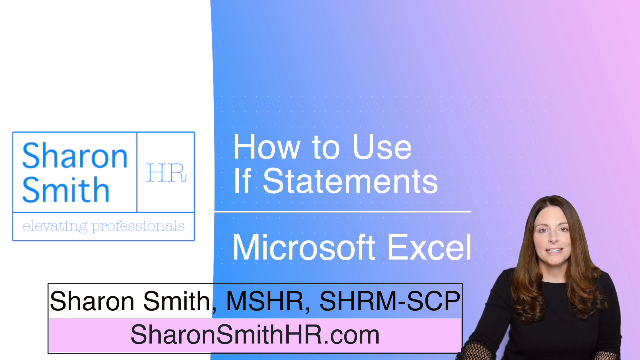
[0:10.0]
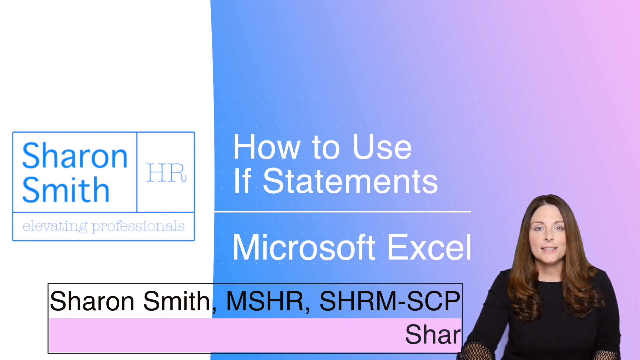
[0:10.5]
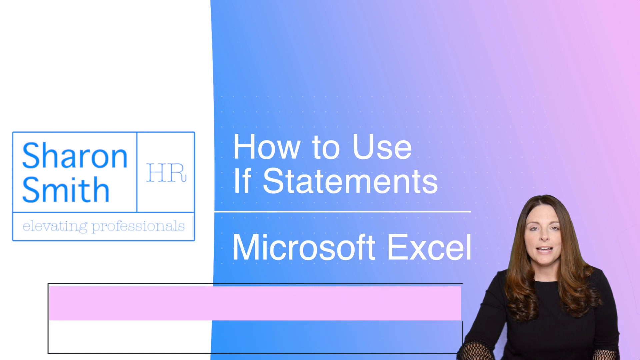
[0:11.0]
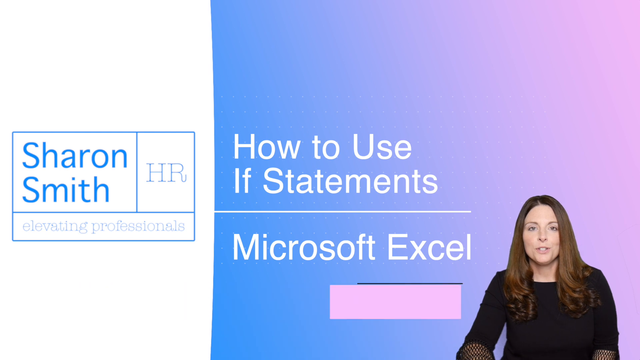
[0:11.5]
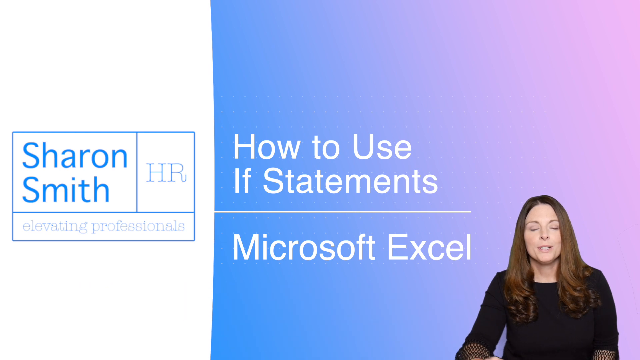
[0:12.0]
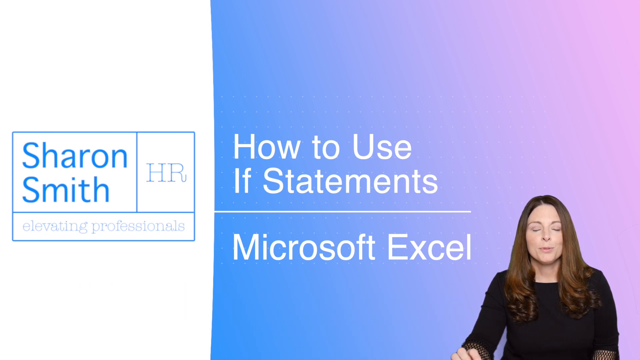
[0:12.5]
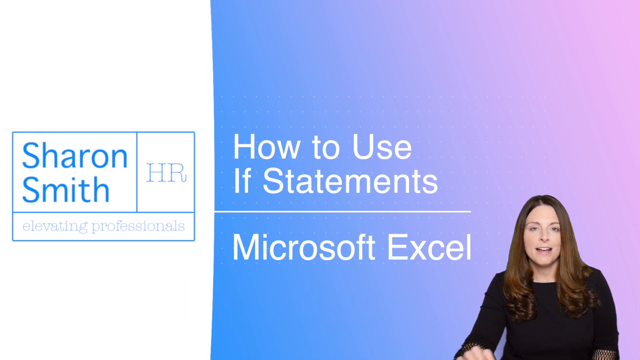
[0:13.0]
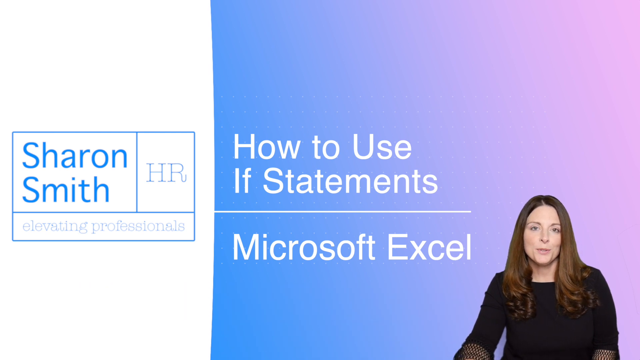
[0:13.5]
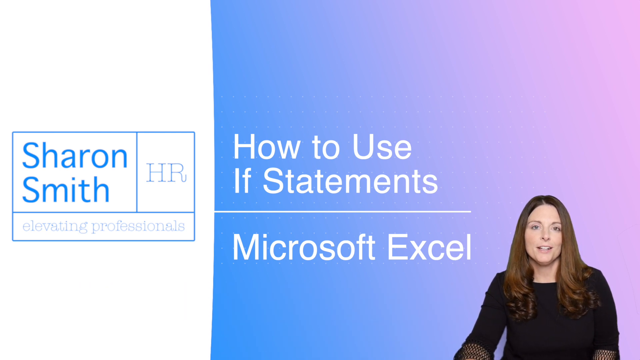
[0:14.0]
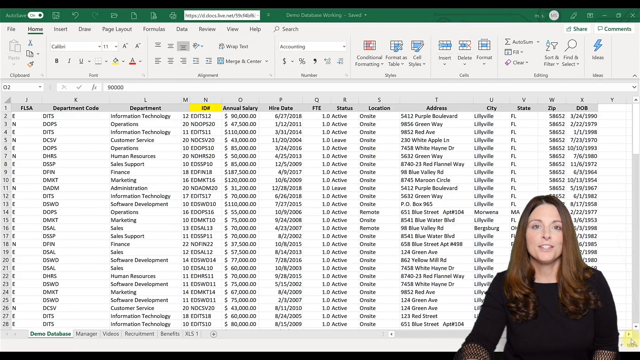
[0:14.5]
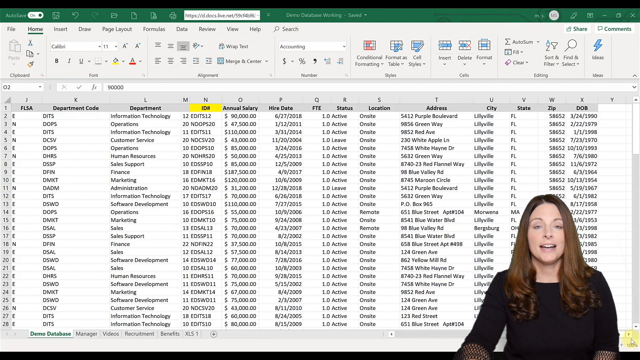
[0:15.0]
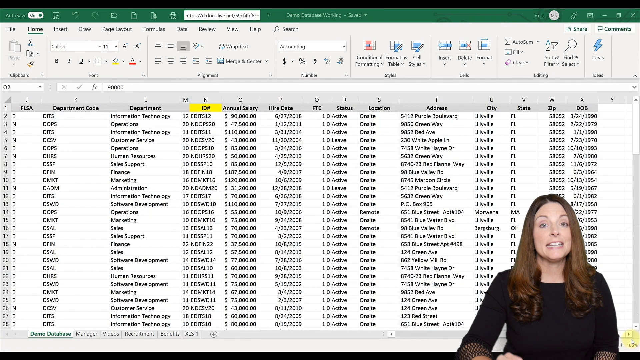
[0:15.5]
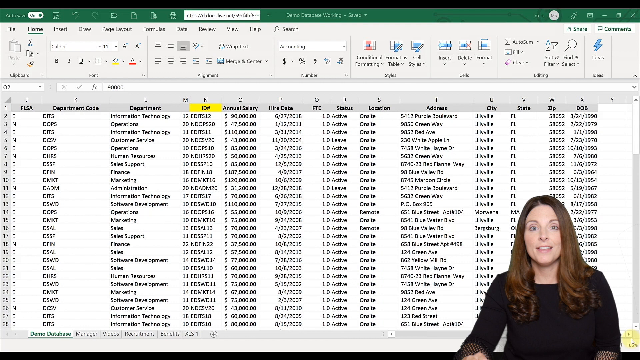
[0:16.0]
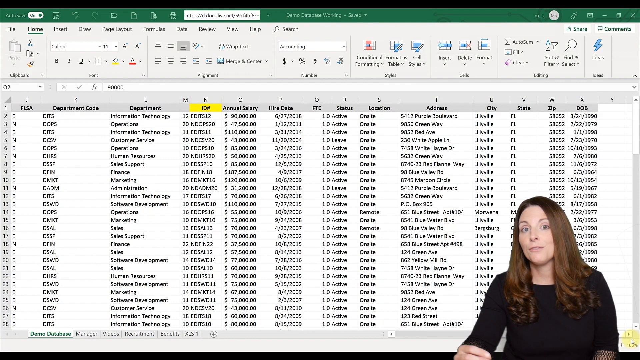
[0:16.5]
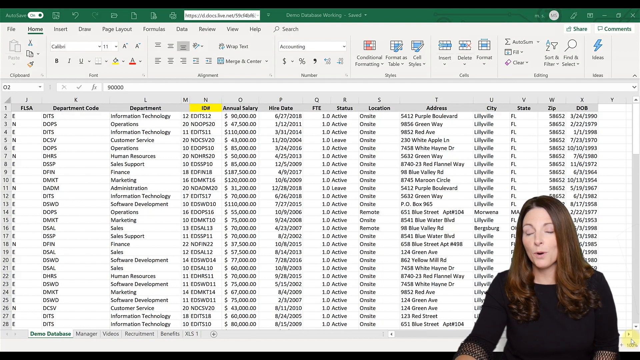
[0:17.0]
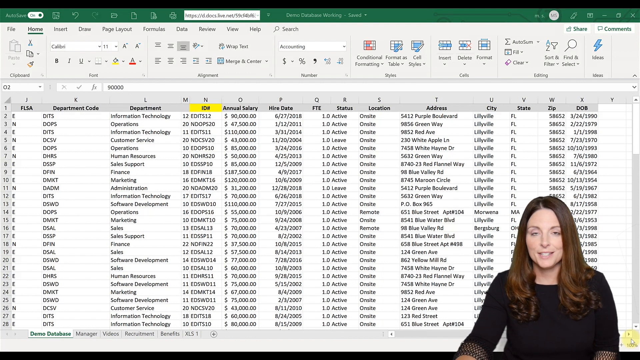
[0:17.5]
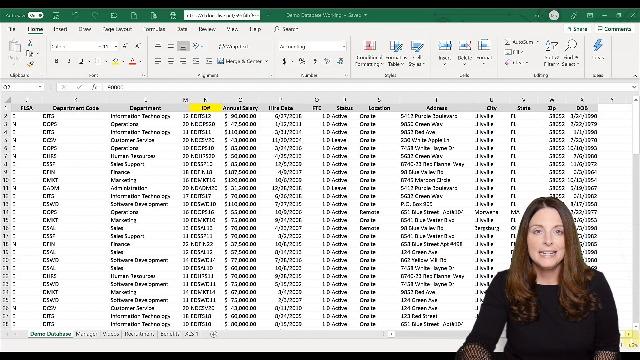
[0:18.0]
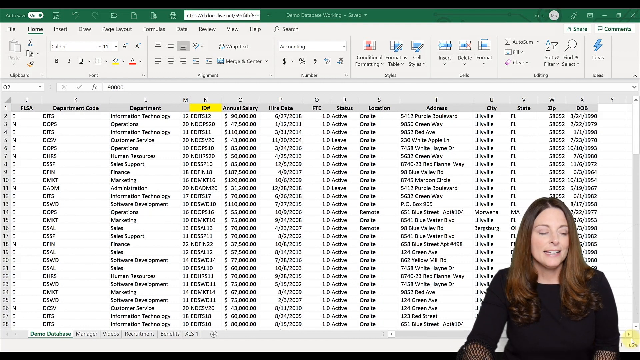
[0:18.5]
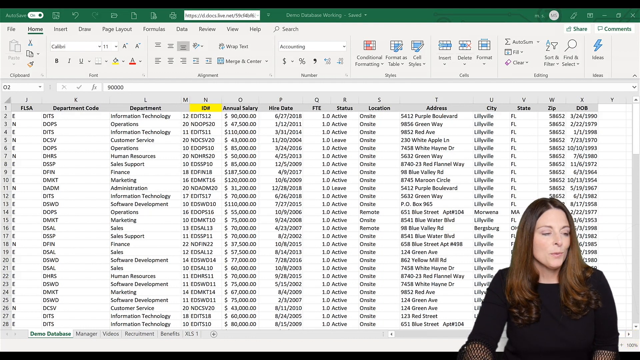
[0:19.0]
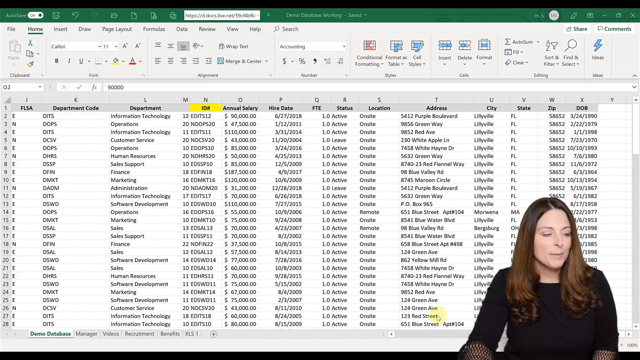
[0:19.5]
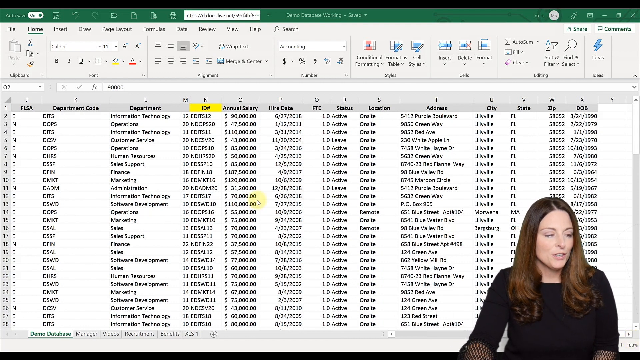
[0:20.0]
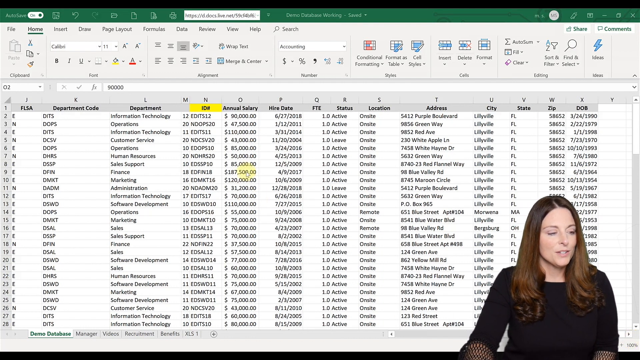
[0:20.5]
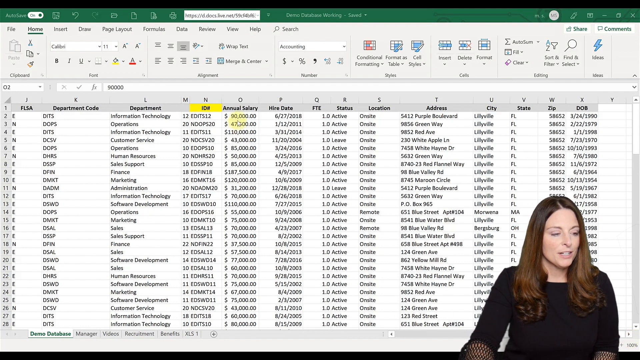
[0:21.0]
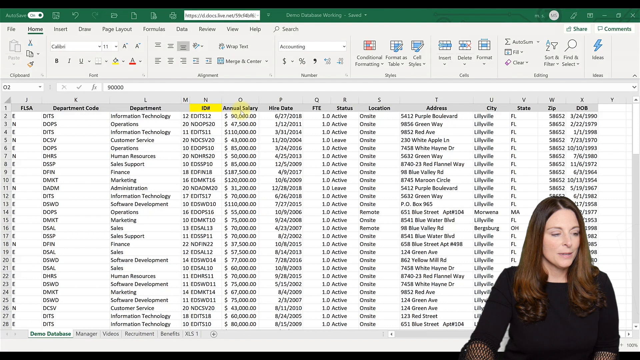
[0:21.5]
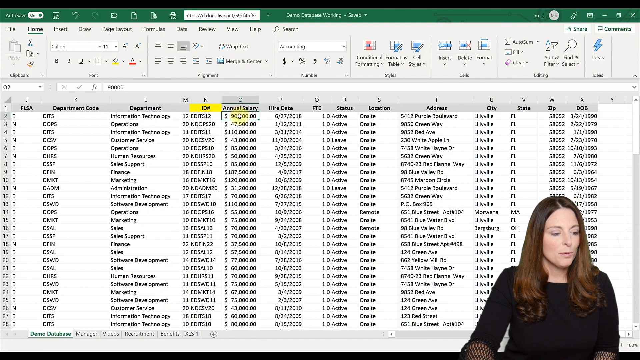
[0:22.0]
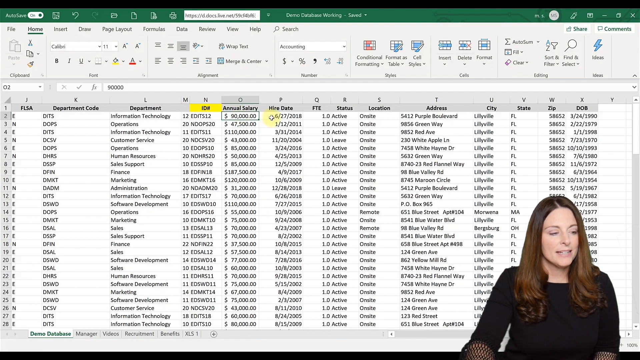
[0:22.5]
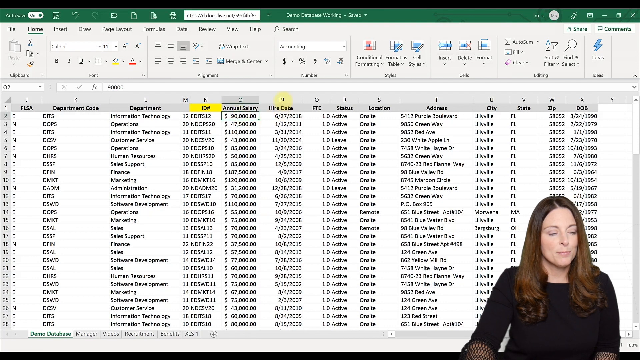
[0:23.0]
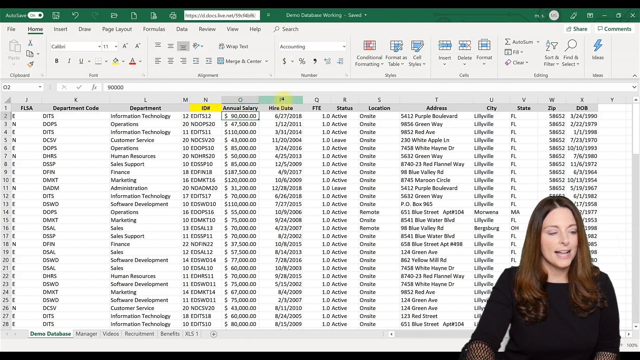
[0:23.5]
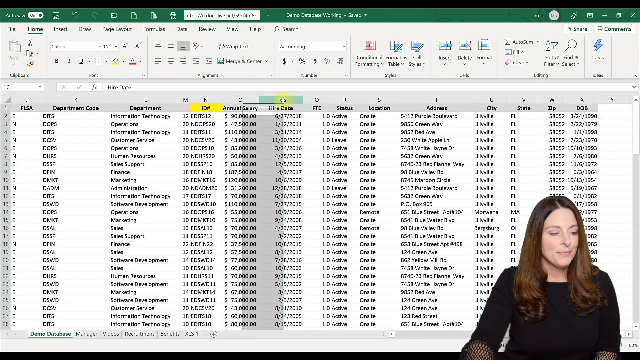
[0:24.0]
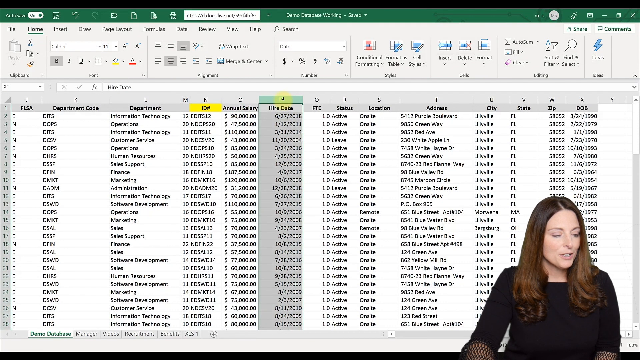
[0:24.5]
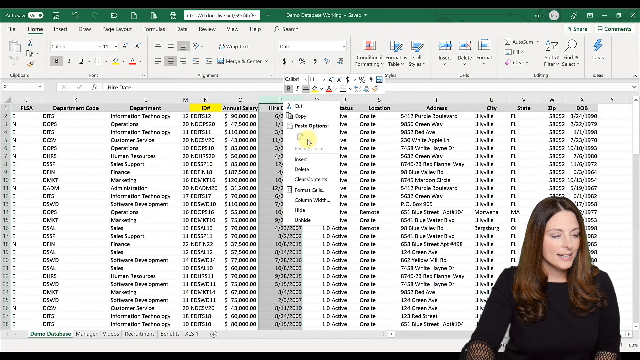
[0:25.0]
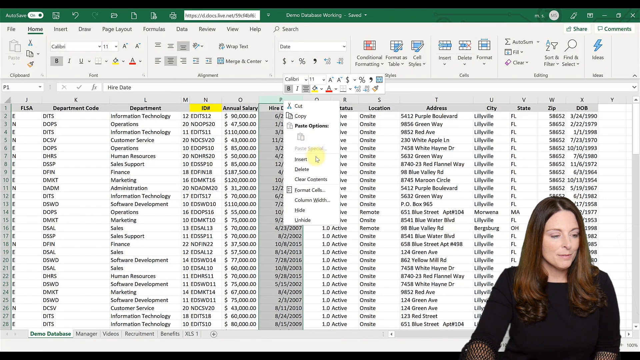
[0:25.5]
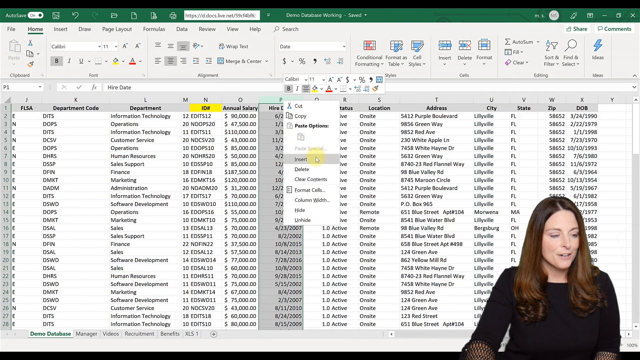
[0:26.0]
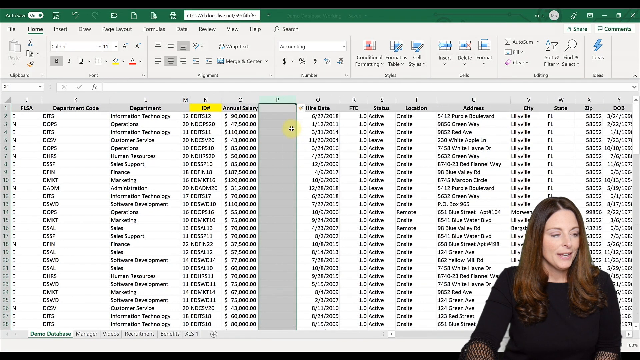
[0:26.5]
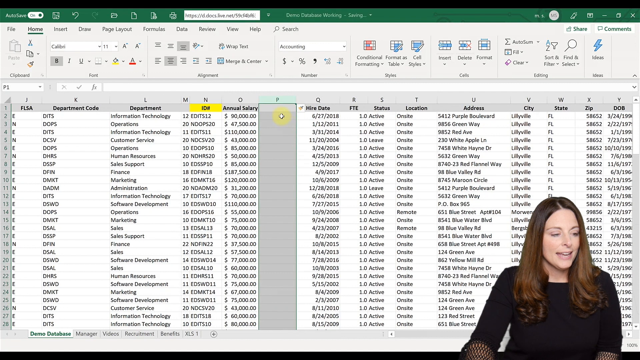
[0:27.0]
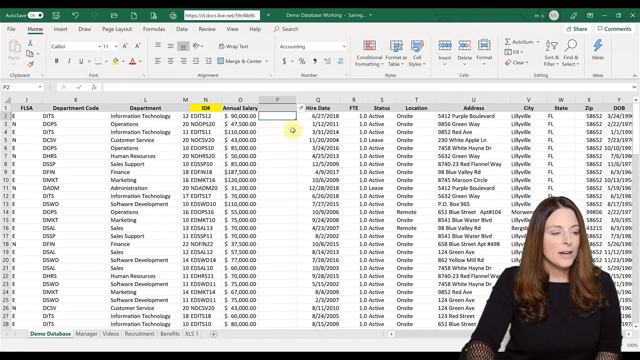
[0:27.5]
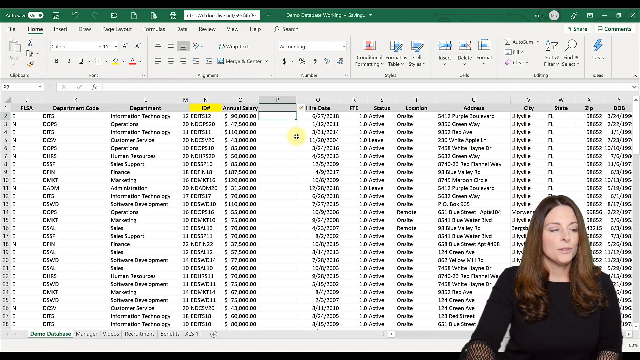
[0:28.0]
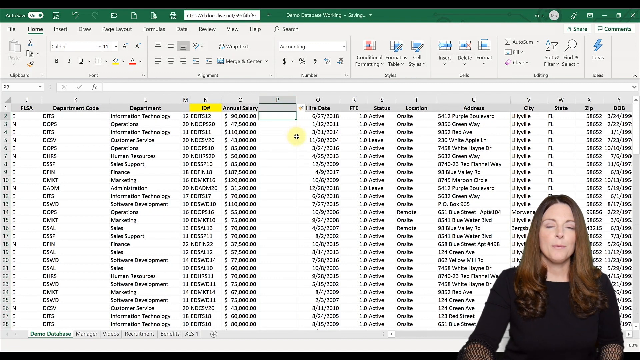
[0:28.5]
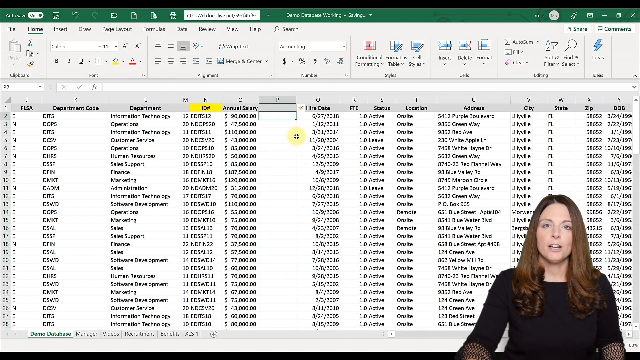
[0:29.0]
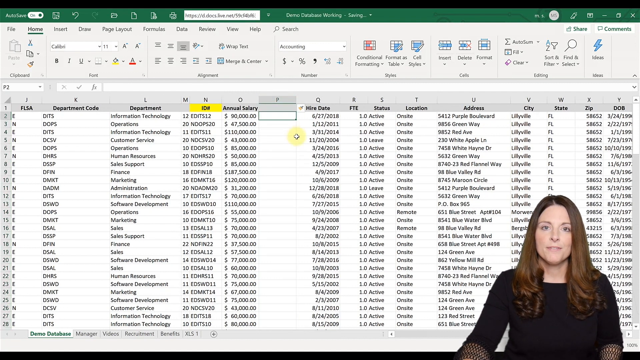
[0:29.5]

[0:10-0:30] Text in the center reads "how to use if statements", with "Microsoft Excel" below it, and "Elevating Professionals" appears with Sharon Smith's name. At the very bottom are her name, "Sharon Smith, MSHR, SHRM-SCP", and her website. On the right side of the screen she talks toward the viewer, her mouth moving; she wears a black shirt and has brown hair. An Excel spreadsheet then appears with the middle column highlighted, apparently labeled "ids". To its left are department code and department, and to its right are annual salary, hire date, status, location, address, city, state, zip, and date of birth. A cursor moves across the screen, passes over annual salary, and clicks on hire date to highlight that entire selection. It then right-clicks and selects Insert, and a new column appears with its first square highlighted.